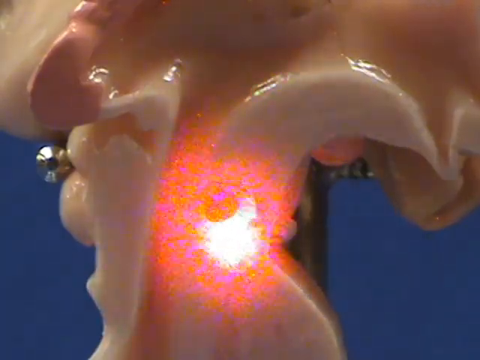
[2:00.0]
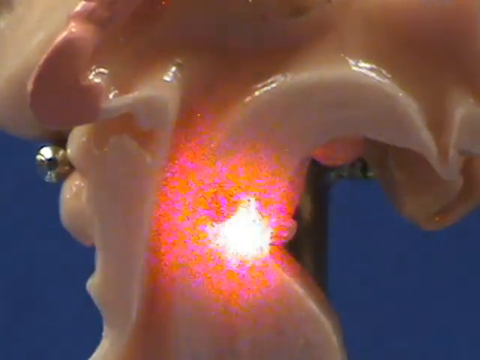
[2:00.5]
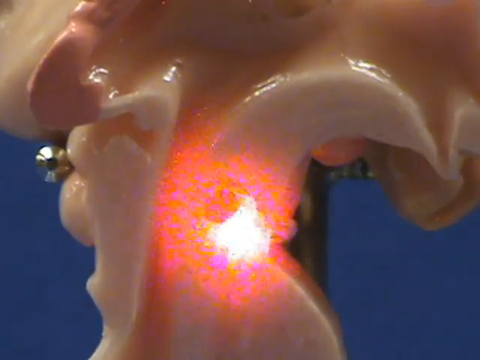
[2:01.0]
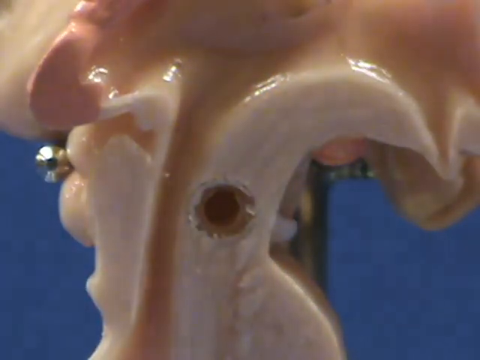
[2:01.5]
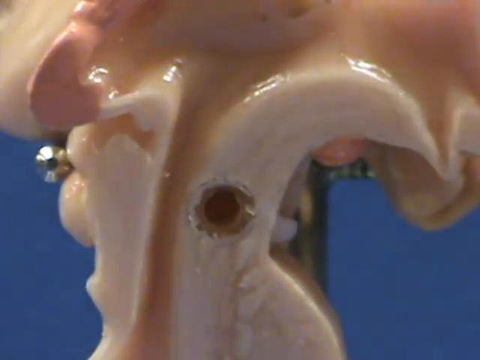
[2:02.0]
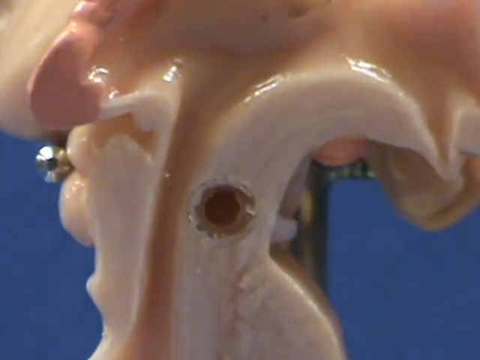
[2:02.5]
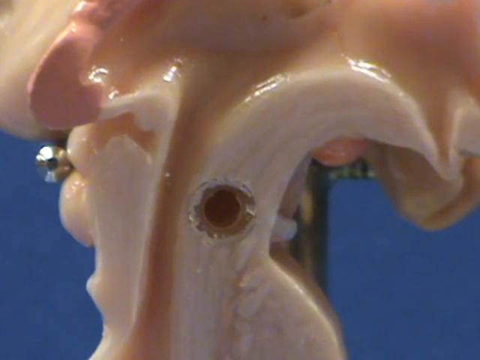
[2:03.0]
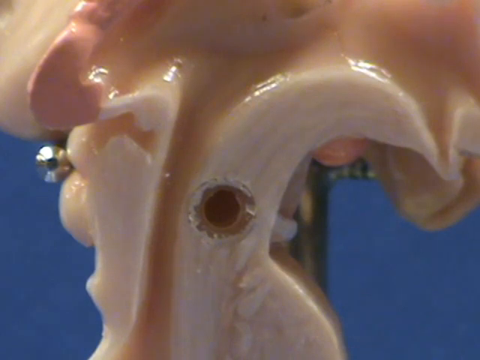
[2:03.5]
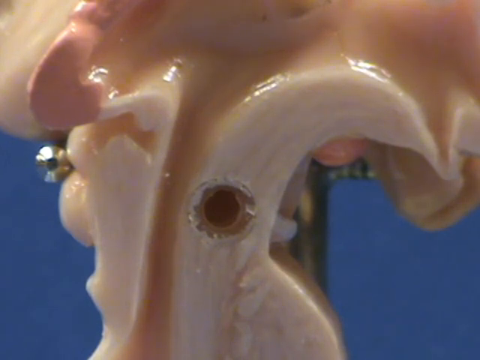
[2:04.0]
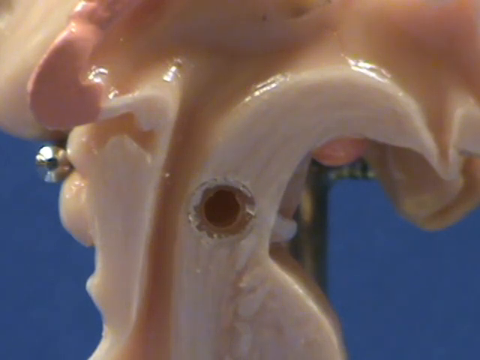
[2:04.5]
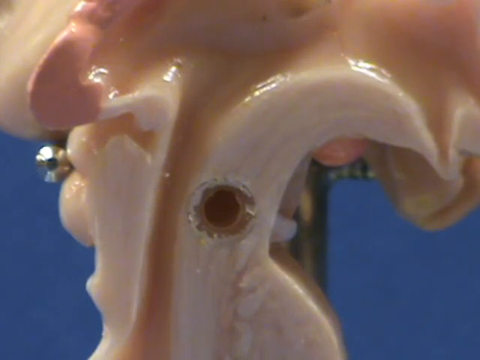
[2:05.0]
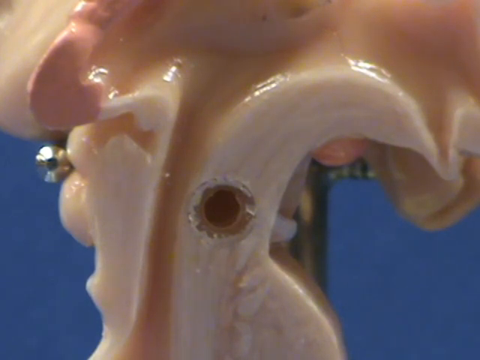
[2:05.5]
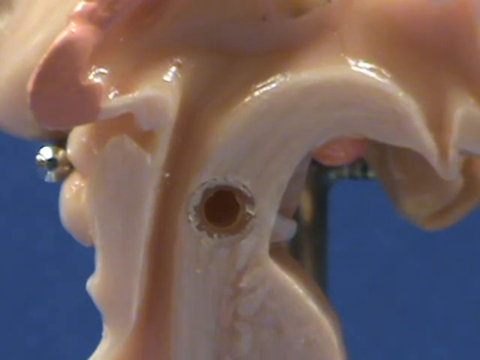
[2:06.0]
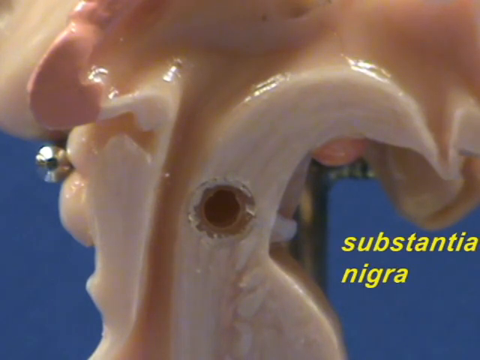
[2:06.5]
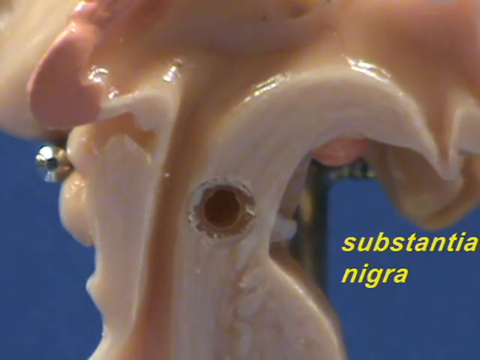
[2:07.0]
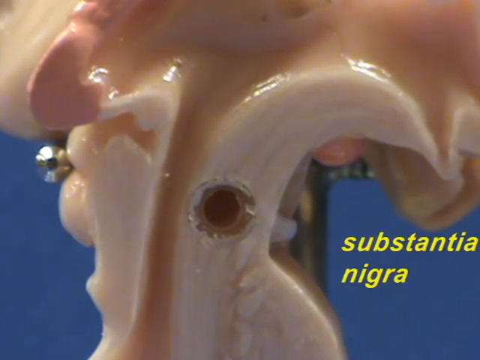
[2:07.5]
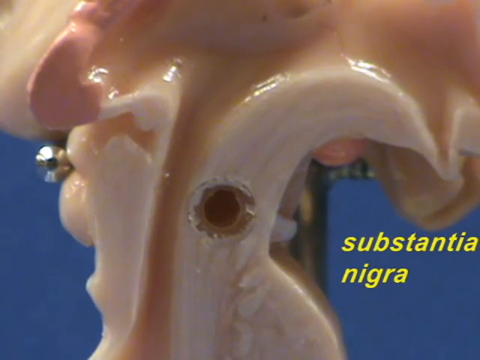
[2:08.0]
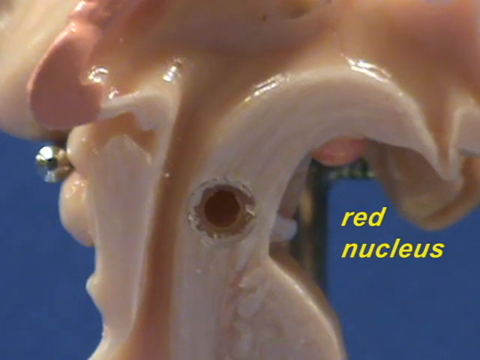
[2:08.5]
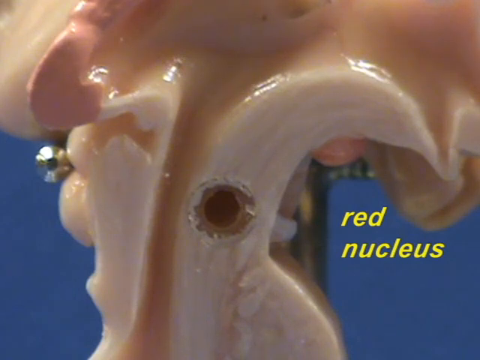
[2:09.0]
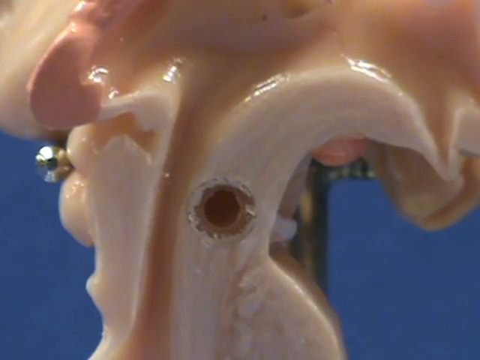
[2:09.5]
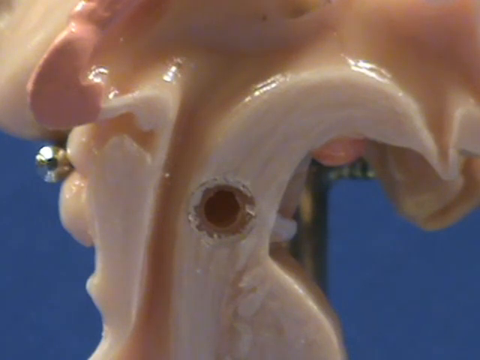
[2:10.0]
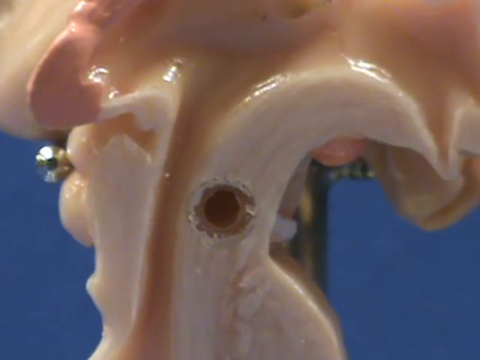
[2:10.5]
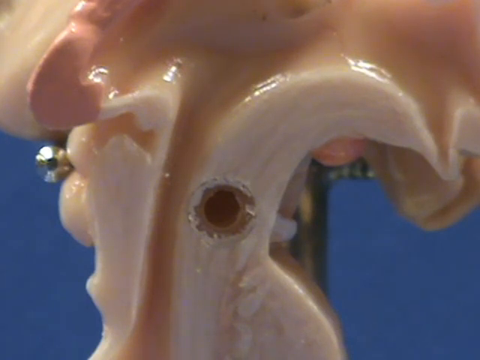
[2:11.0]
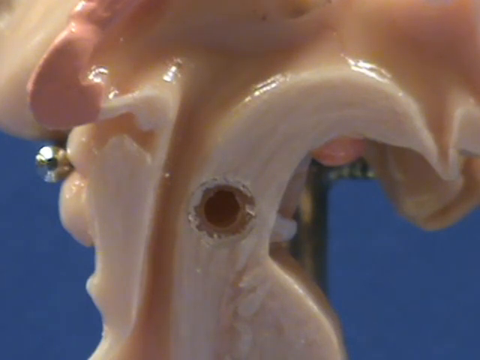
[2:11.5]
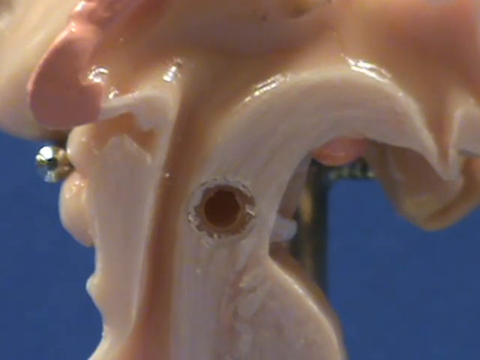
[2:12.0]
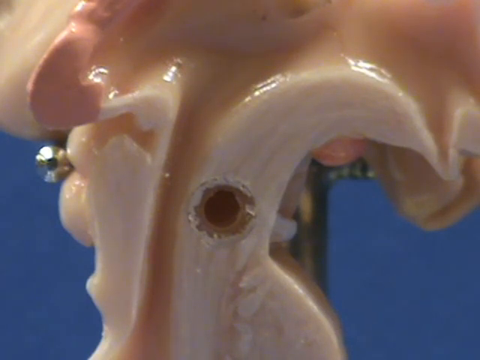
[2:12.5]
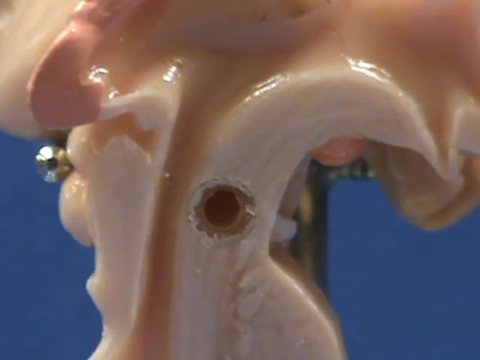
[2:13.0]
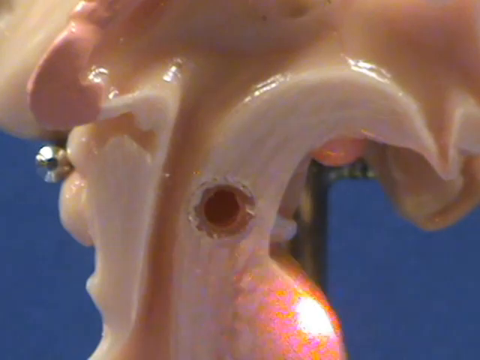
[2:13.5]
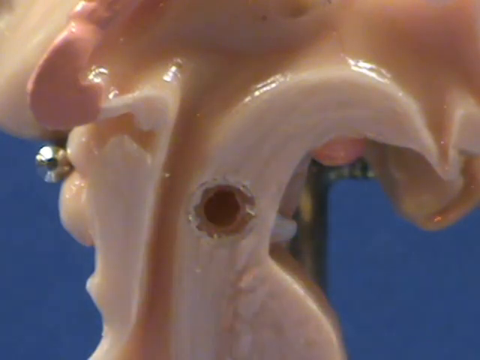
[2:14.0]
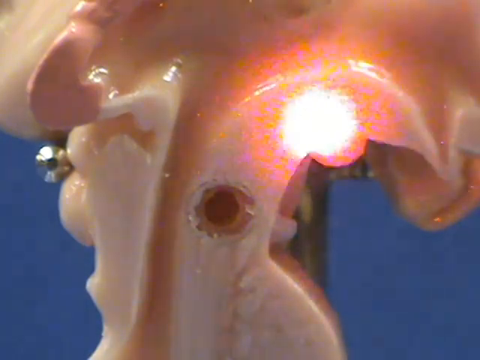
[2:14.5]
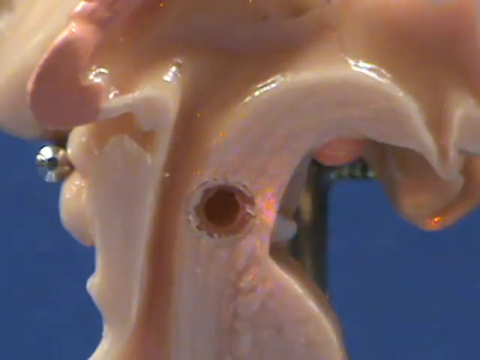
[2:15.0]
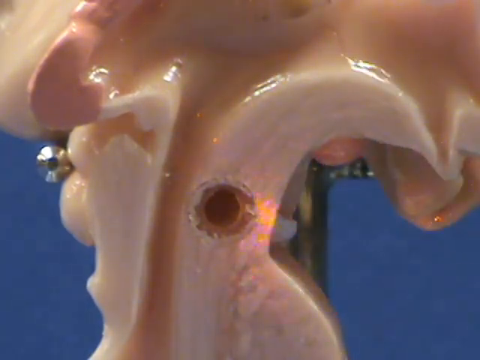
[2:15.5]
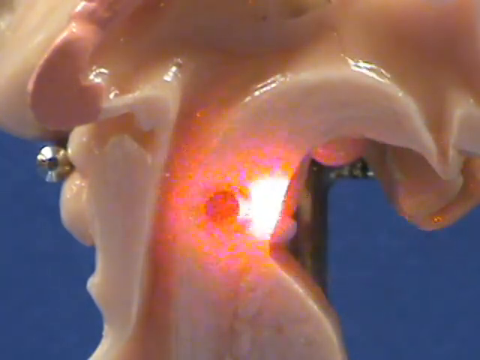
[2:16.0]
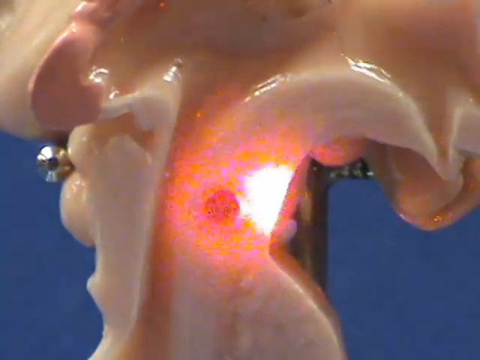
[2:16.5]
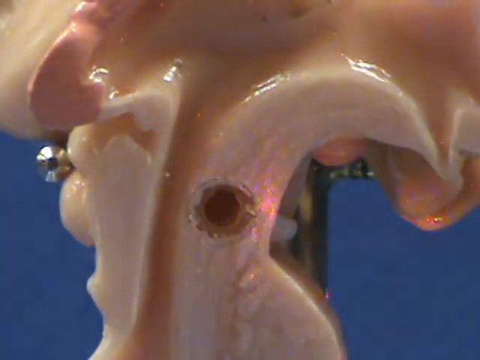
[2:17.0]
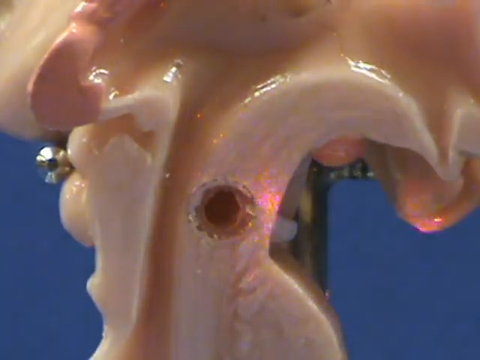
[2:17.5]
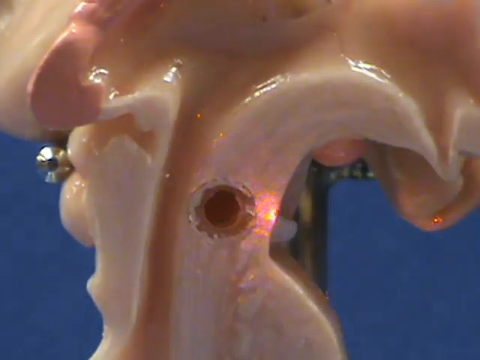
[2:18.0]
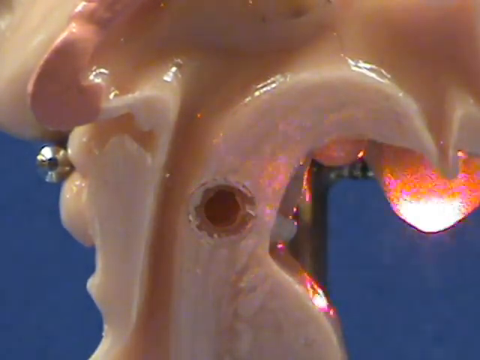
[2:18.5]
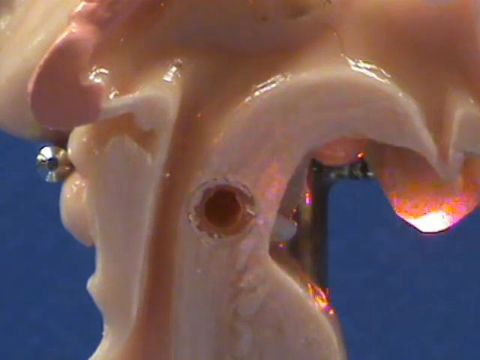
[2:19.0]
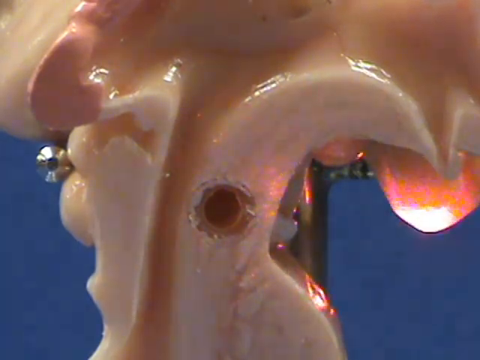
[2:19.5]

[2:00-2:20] Against the dark blue background, the view is very zoomed in on the object resembling a part of the human body. A high-beam flashlight is used to point out parts of it; the intense beam is probably about one inch in diameter, with a pinker light spreading out around it. Yellow text labels pop up somewhat more quickly here: "substantia nigra" appears, not placed on the object but in the blue area in the corner. That goes away, and "red nucleus" pops up in the same spot. There is no light, so it is hard to see which part is meant.